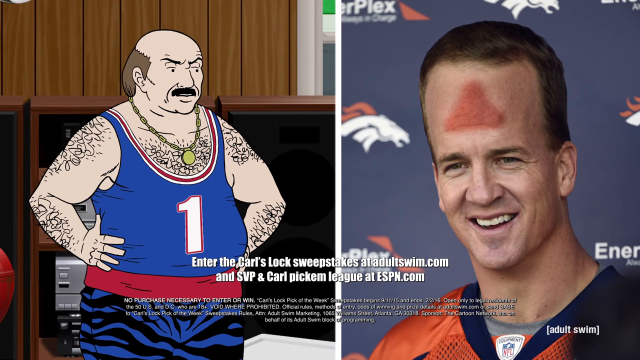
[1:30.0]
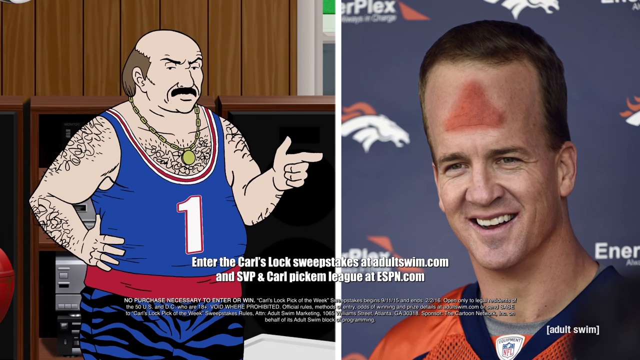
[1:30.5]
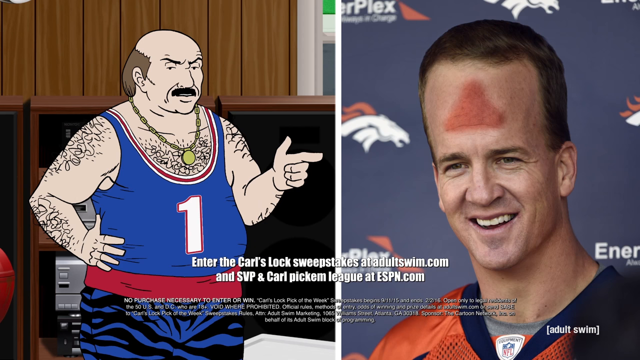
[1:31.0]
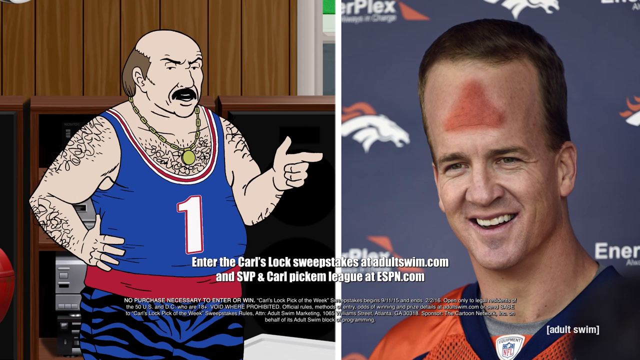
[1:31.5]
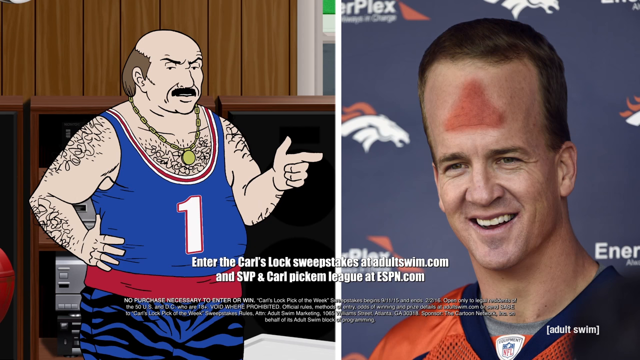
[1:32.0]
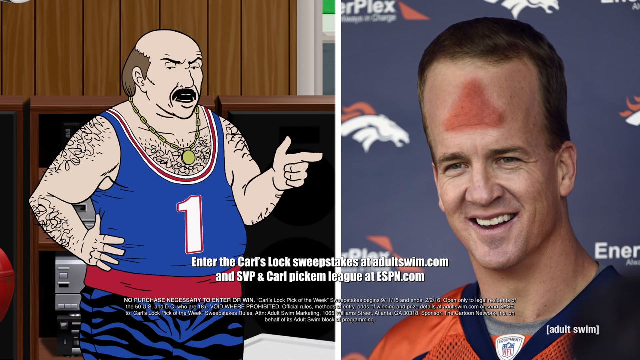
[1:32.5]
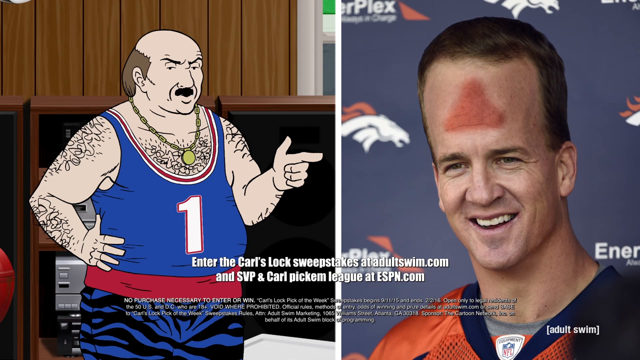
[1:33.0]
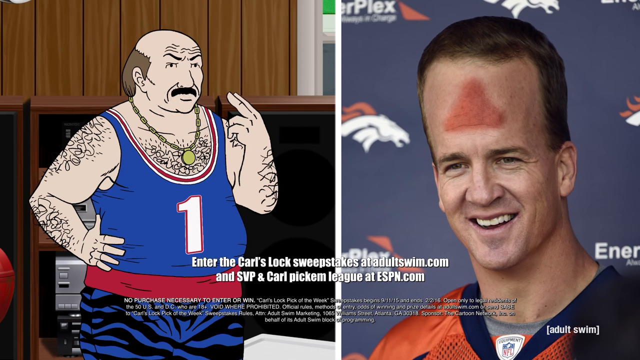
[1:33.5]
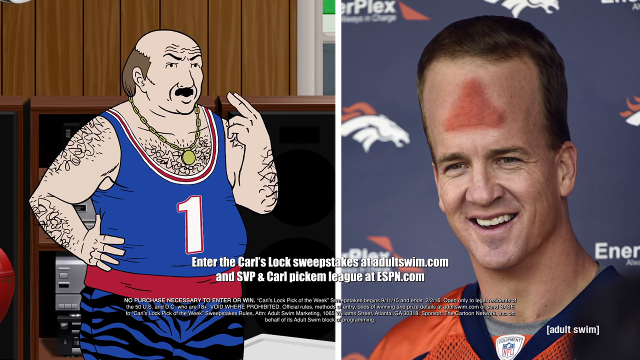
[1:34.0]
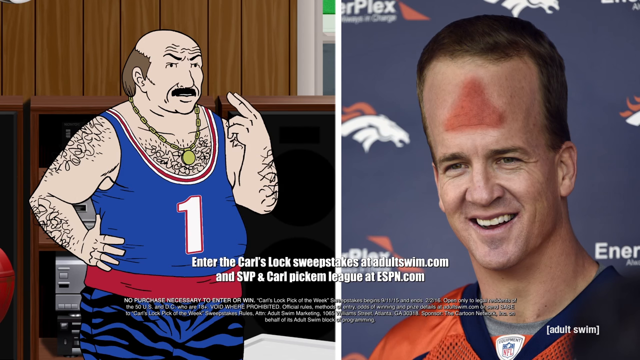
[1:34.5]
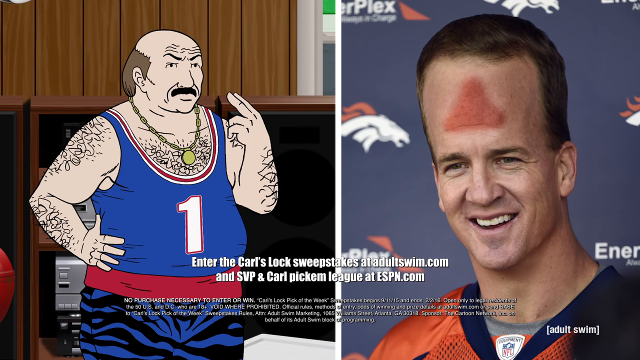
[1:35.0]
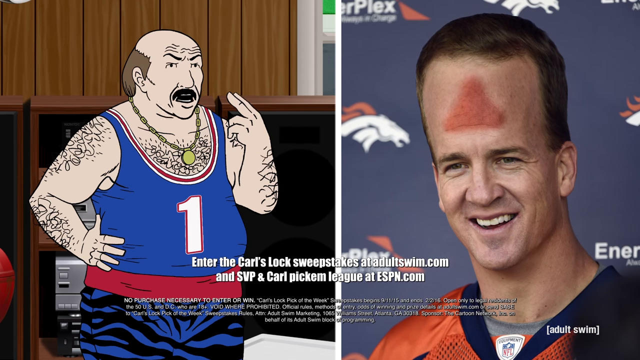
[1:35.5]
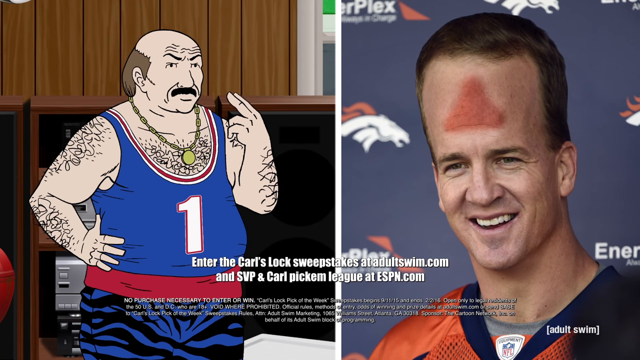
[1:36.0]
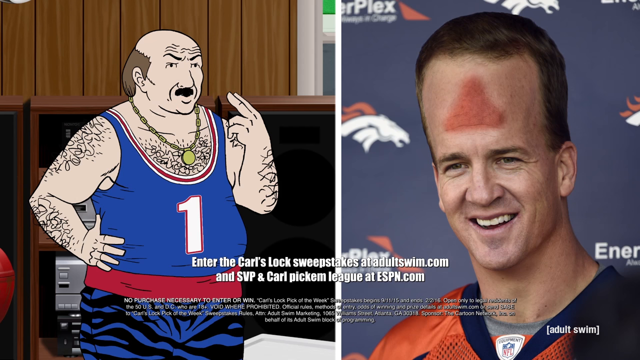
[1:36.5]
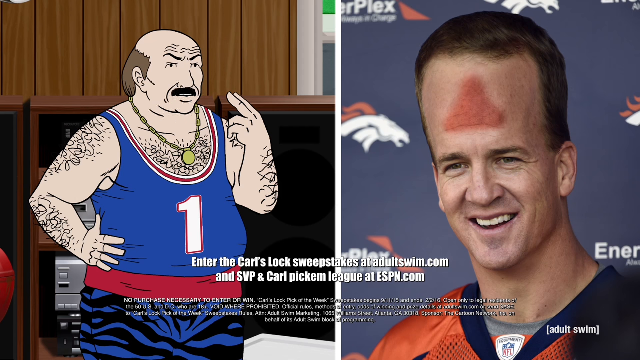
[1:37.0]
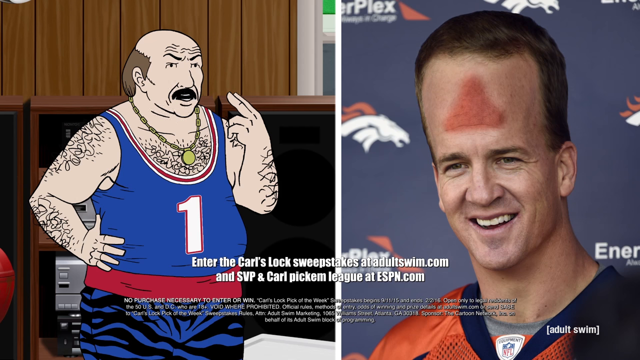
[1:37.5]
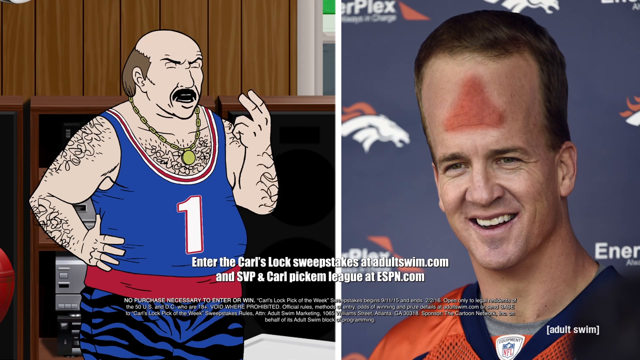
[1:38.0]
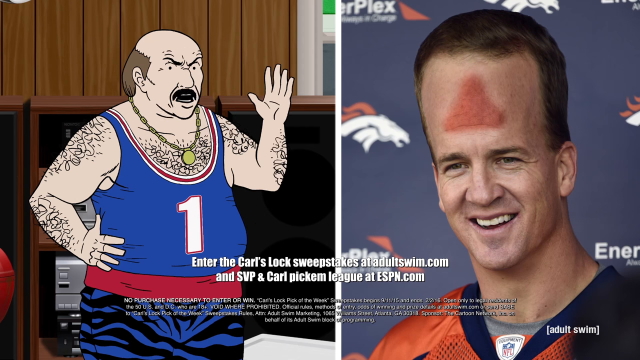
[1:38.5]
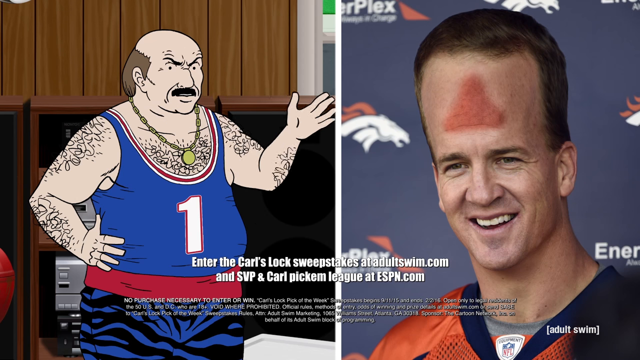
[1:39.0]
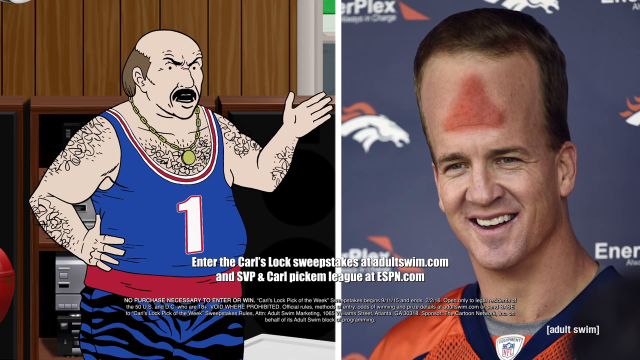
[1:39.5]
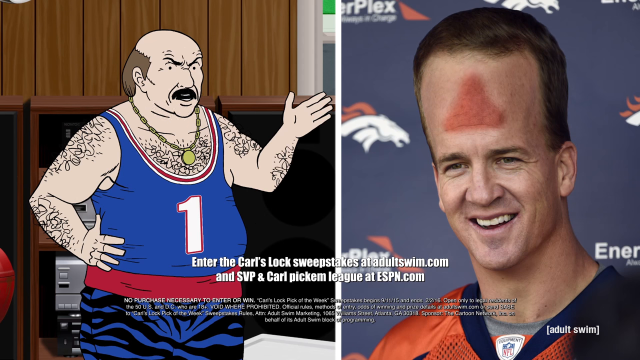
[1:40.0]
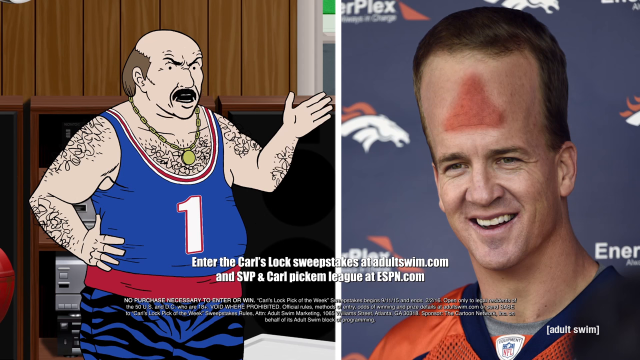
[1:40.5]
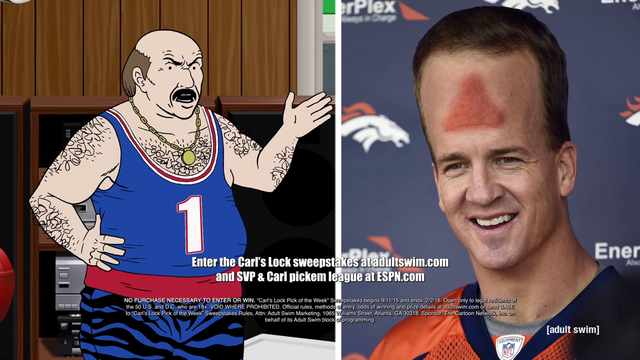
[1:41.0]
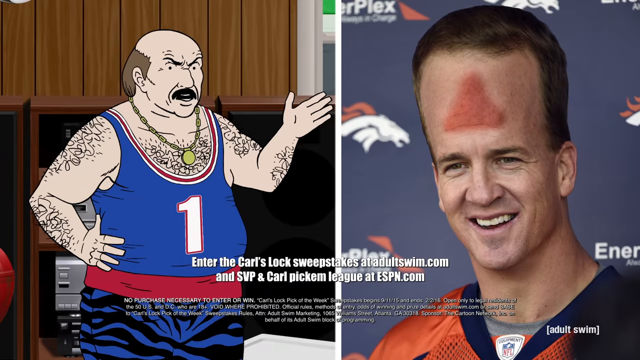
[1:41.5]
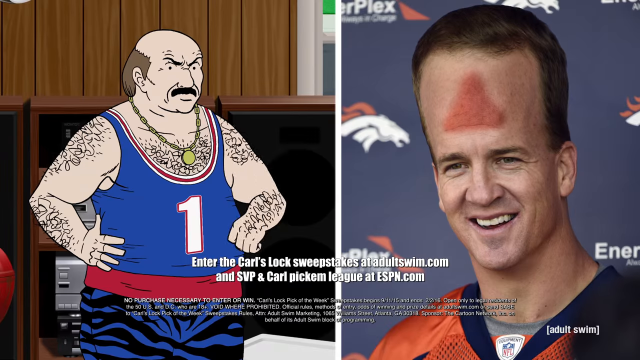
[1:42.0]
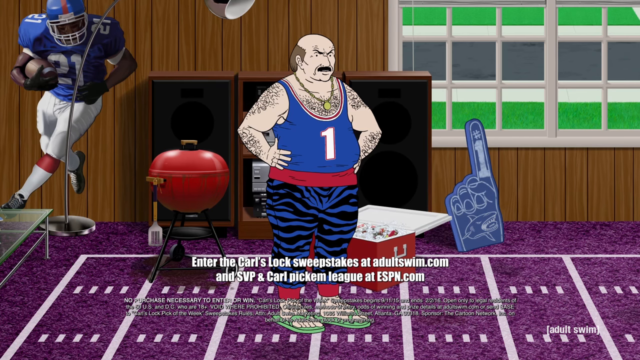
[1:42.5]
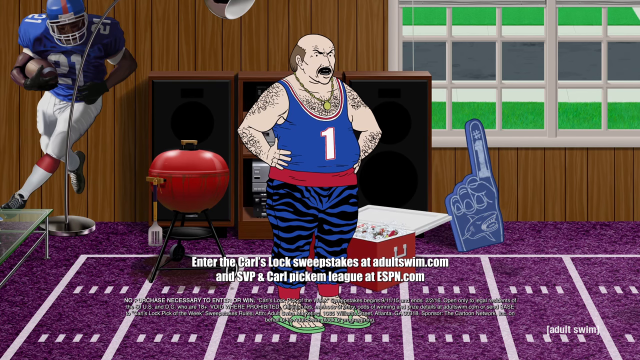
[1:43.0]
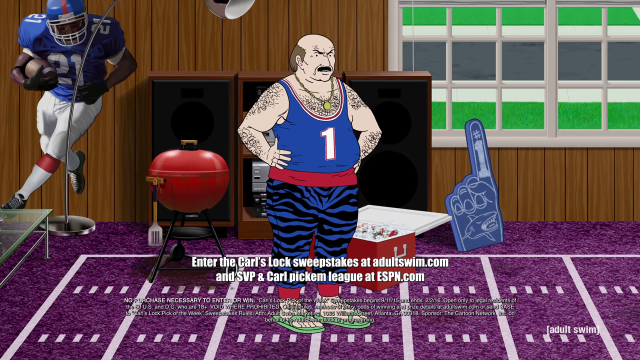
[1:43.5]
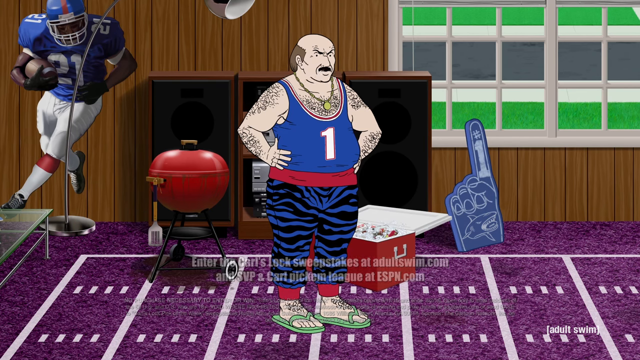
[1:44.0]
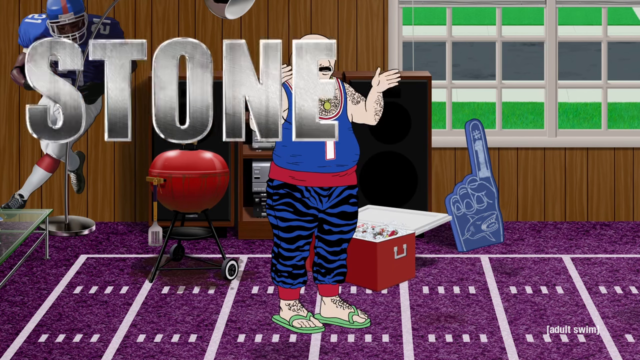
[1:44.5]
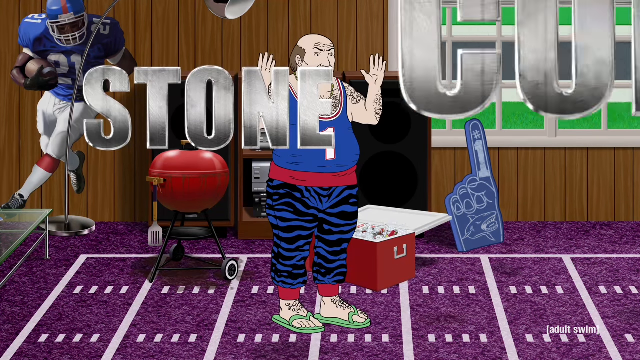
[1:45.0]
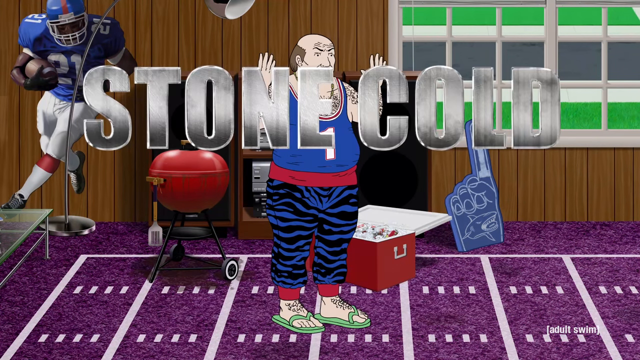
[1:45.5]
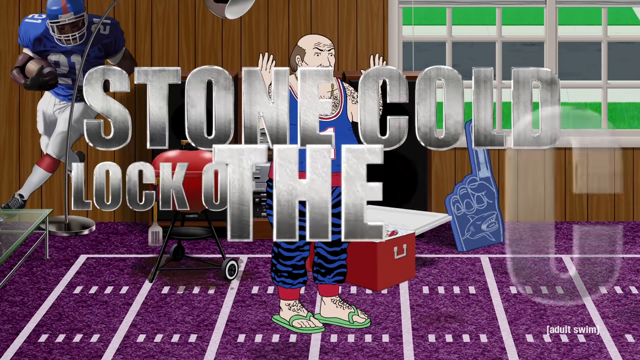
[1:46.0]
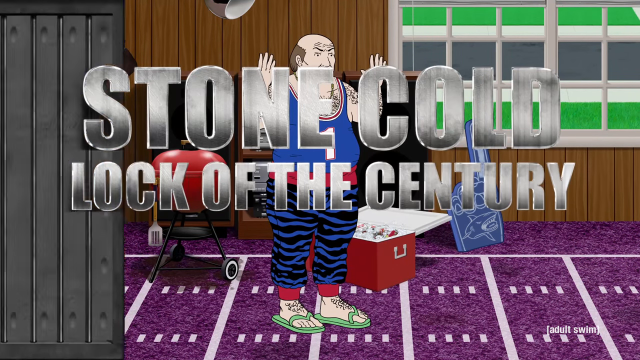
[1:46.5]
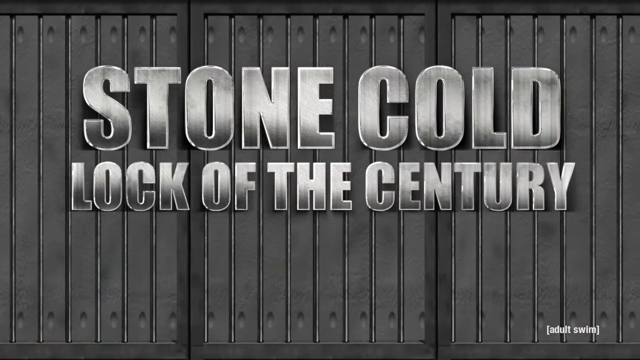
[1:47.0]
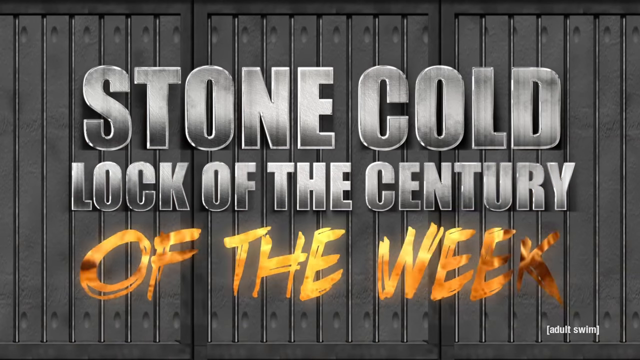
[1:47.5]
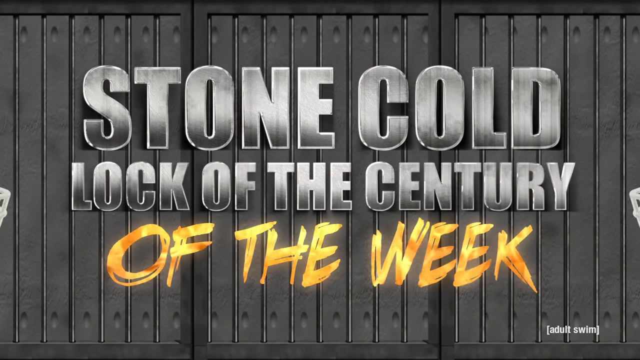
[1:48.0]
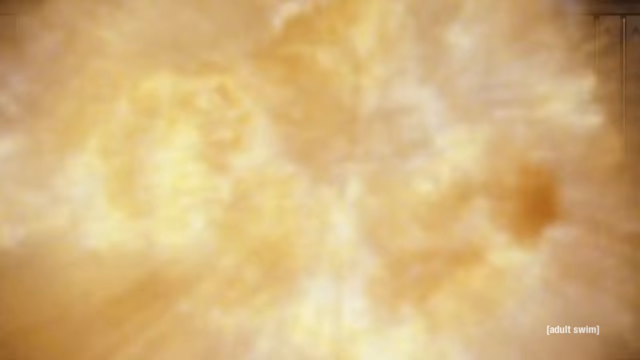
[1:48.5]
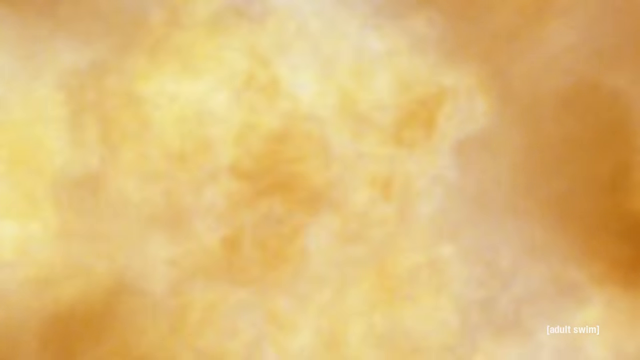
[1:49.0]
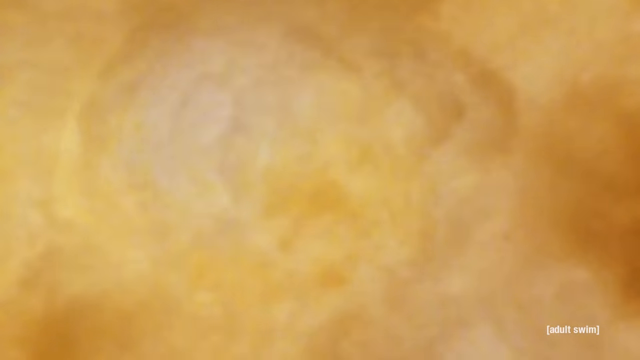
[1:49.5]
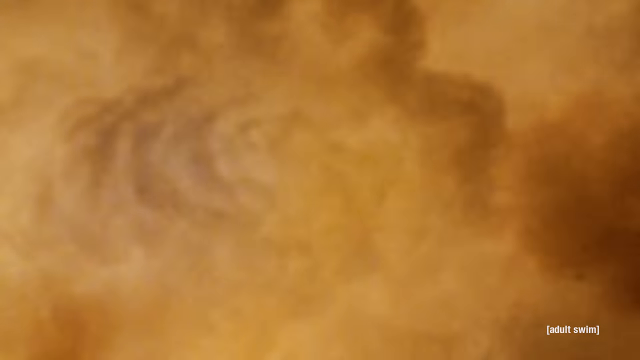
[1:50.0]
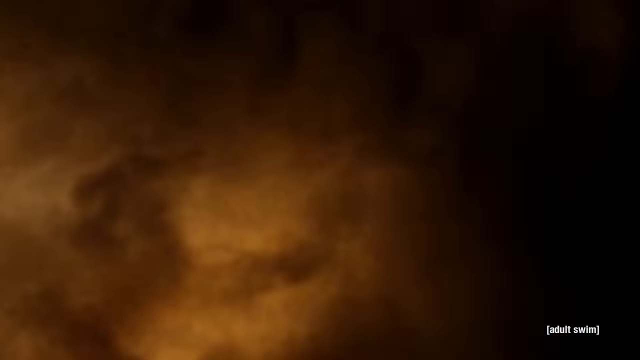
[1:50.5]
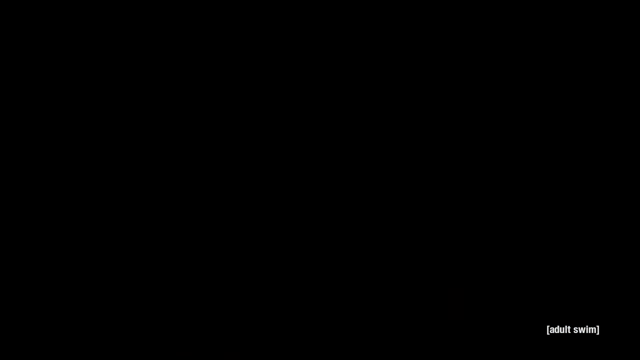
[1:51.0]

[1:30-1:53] A competition link sponsored by espn.com is shown. On the left side of the screen, a man who is talking appears along with fire. Next to him is a picture frame of a football player with a scar on his forehead who is smiling. At the bottom, some rules about the competition link are written. Then a lock of the century of the week logo appears, and the screen goes black. The man wears a necklace and has a bald head; the carpet he stands on is purple, and he wears green sandals. Judging from his facial expression, he looks serious and intense. Behind him are three wooden cabinets, and the wooden wall of the house can be seen. Next to him is a red braai stand.